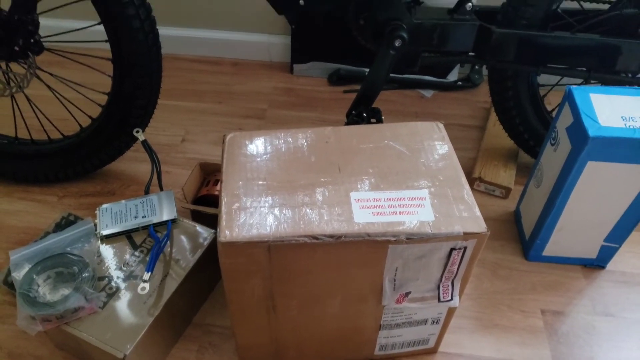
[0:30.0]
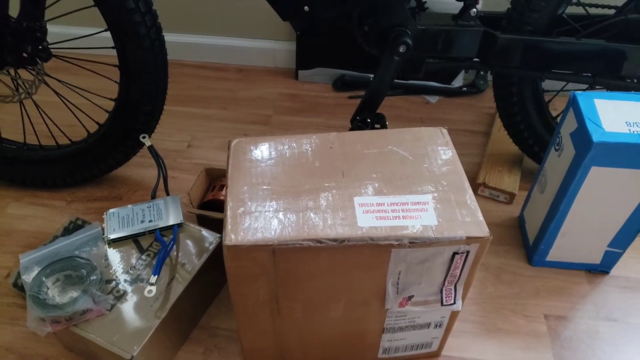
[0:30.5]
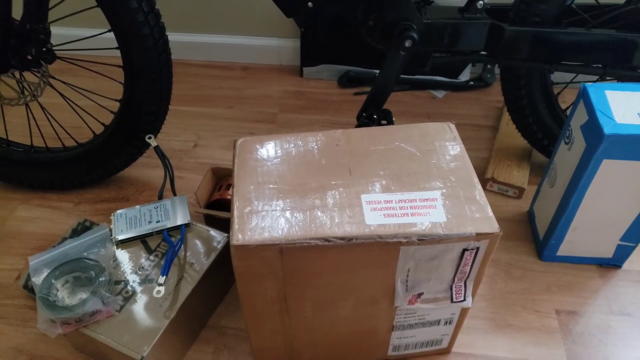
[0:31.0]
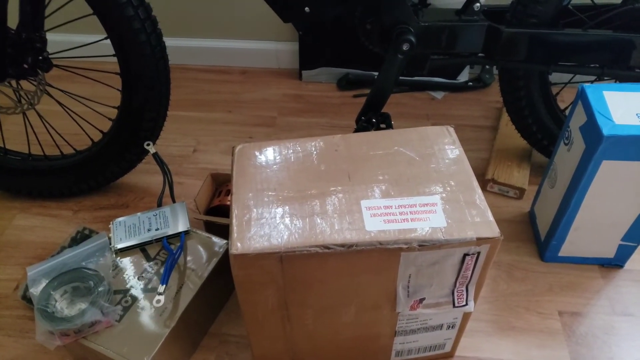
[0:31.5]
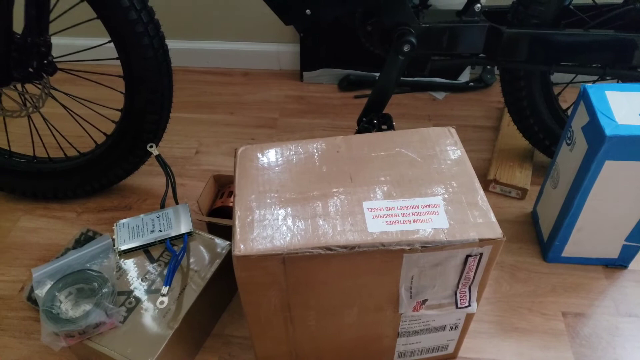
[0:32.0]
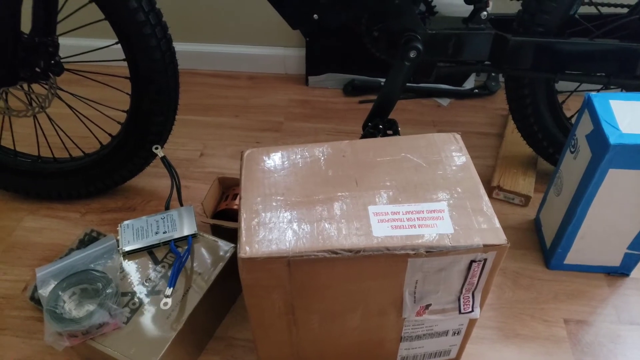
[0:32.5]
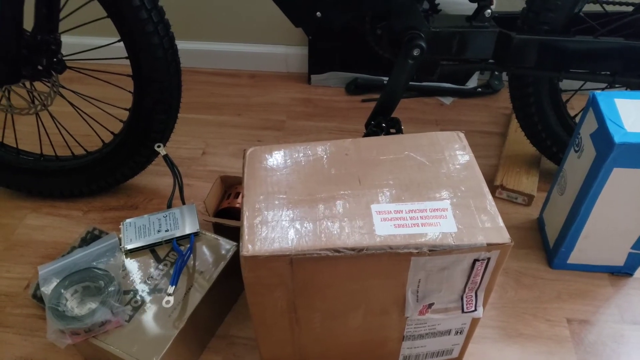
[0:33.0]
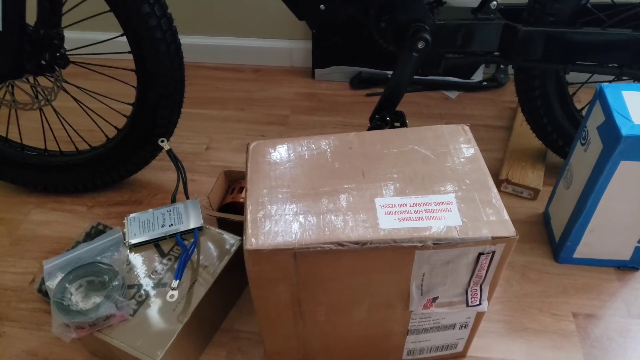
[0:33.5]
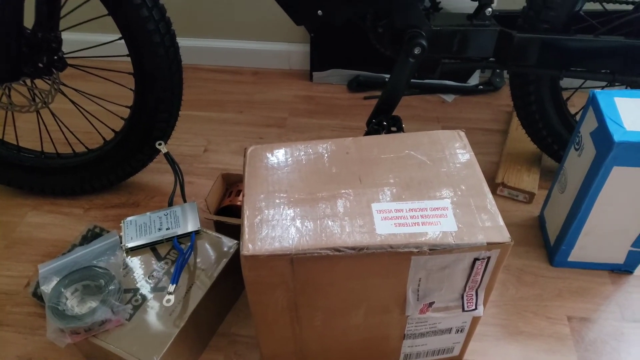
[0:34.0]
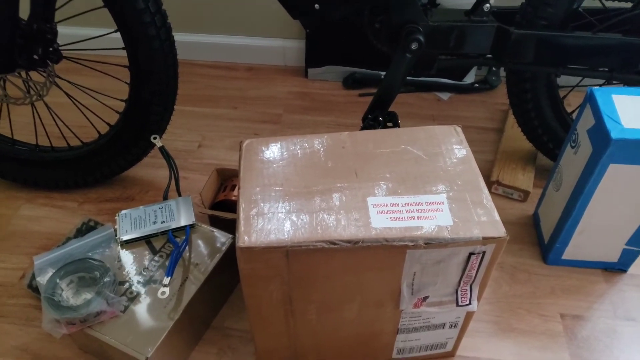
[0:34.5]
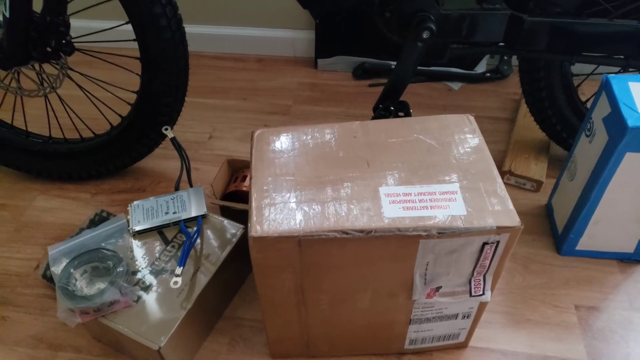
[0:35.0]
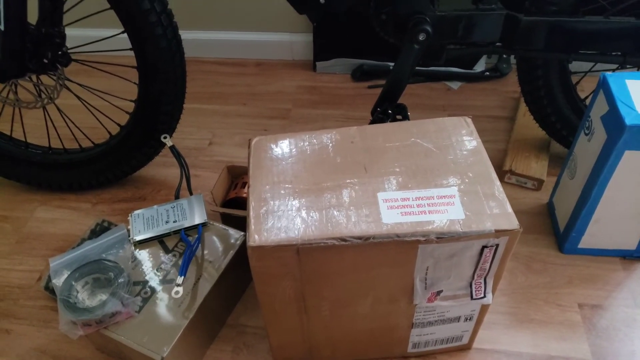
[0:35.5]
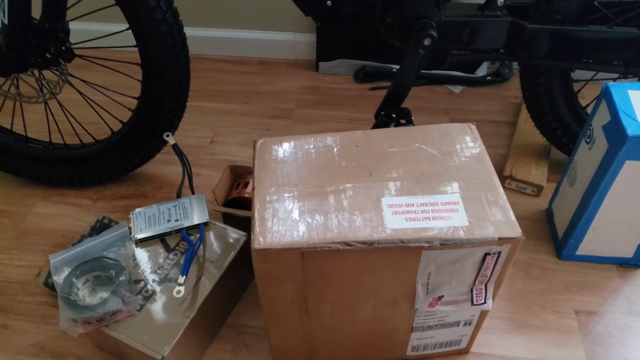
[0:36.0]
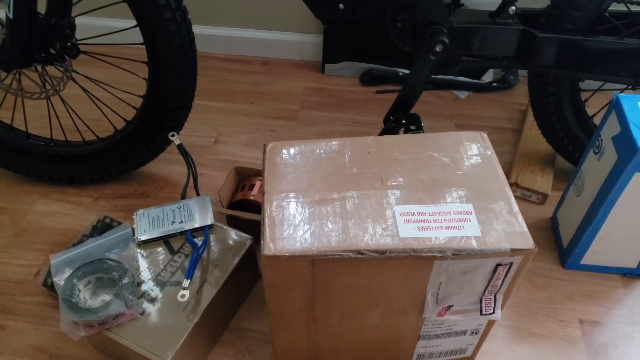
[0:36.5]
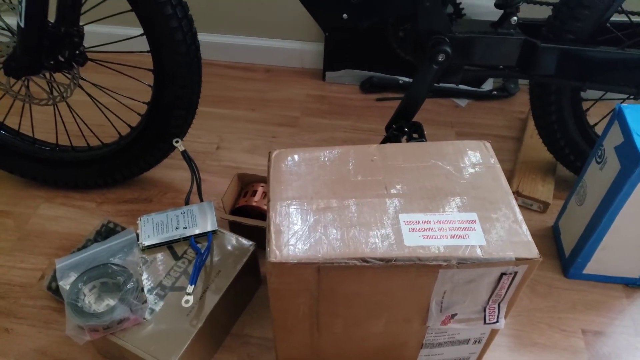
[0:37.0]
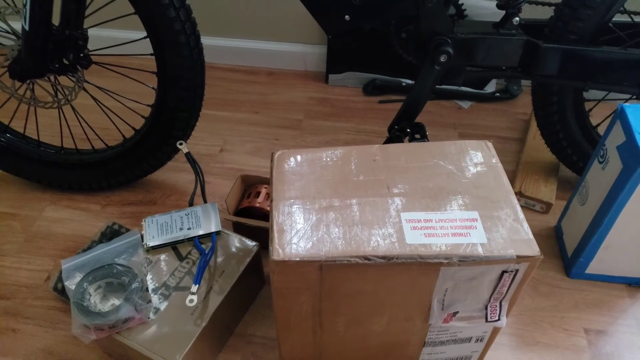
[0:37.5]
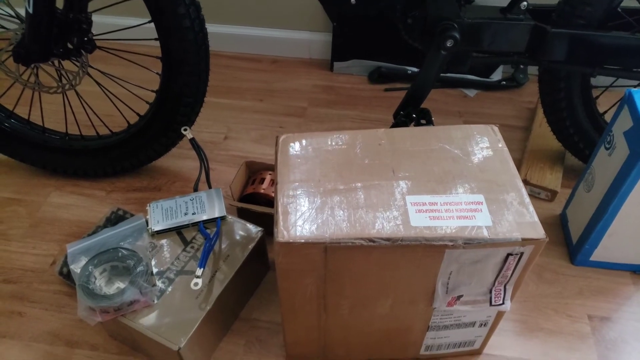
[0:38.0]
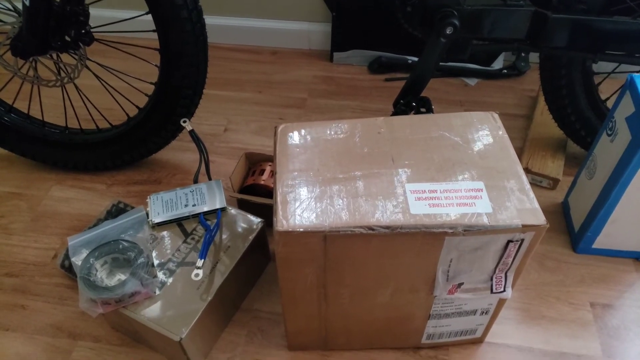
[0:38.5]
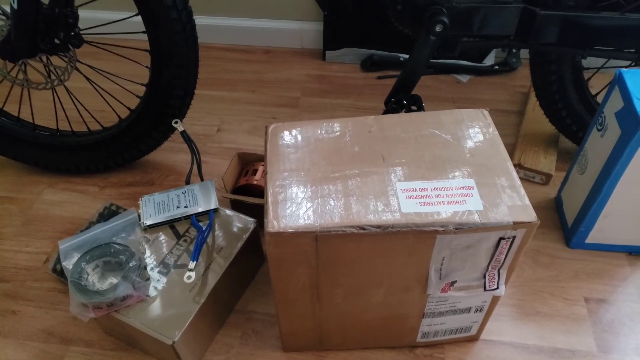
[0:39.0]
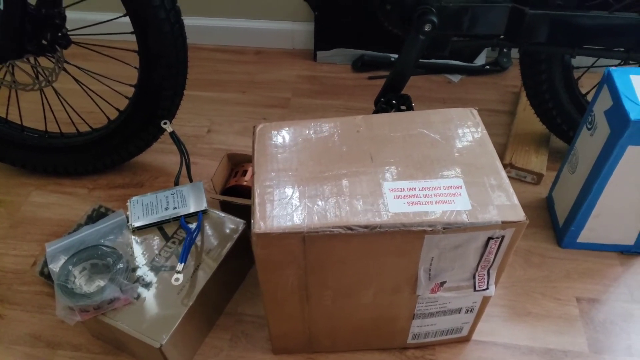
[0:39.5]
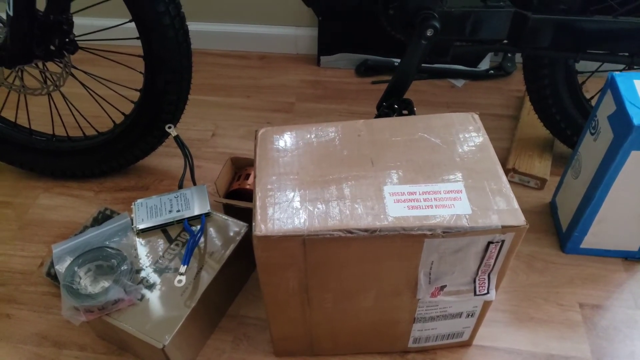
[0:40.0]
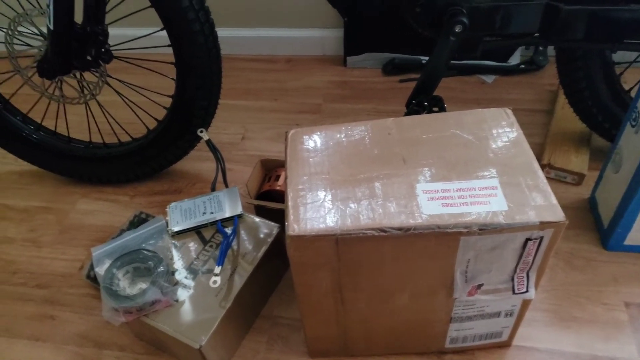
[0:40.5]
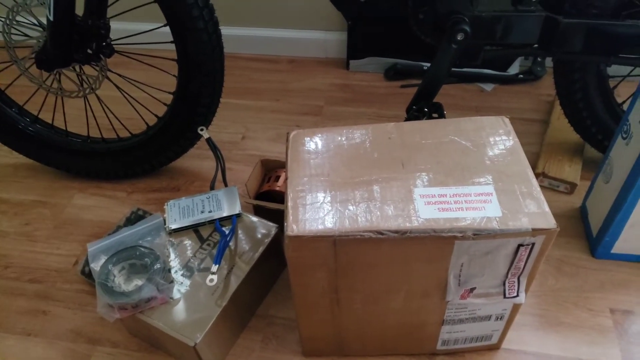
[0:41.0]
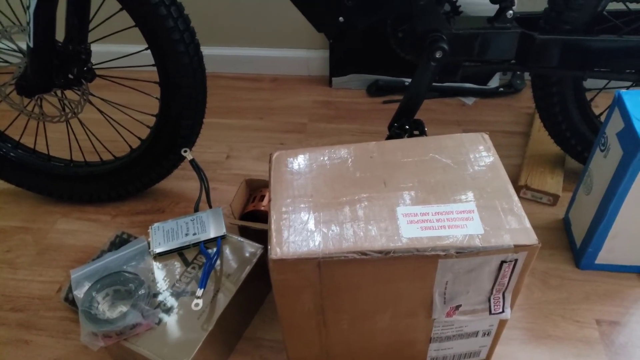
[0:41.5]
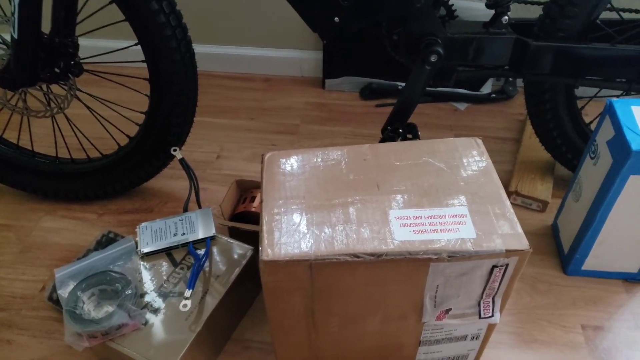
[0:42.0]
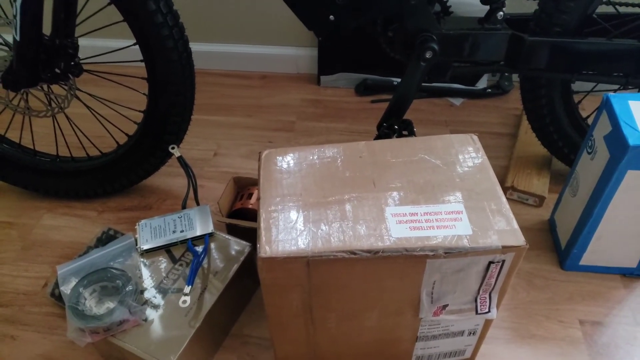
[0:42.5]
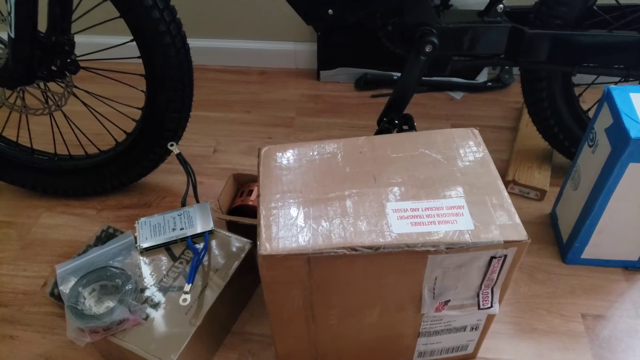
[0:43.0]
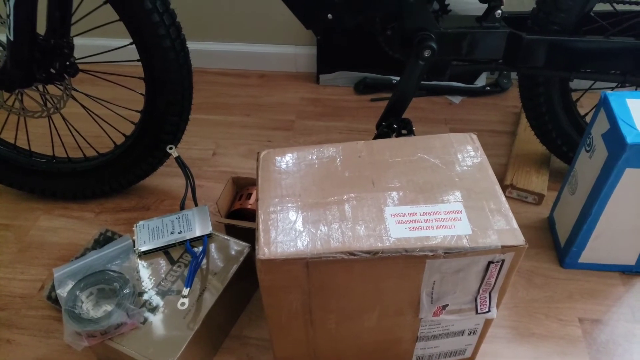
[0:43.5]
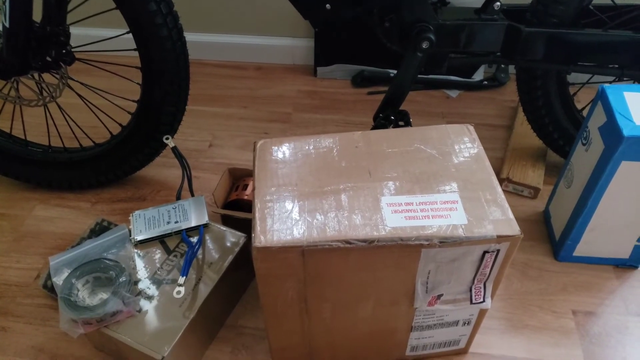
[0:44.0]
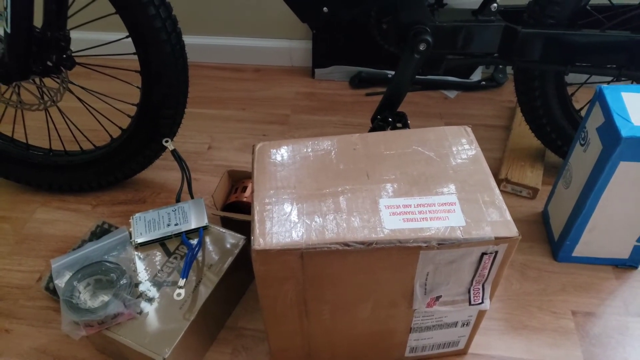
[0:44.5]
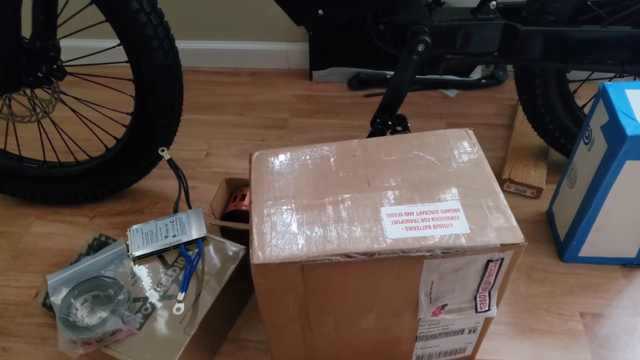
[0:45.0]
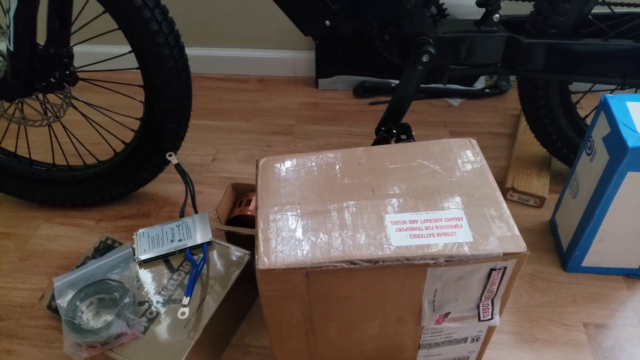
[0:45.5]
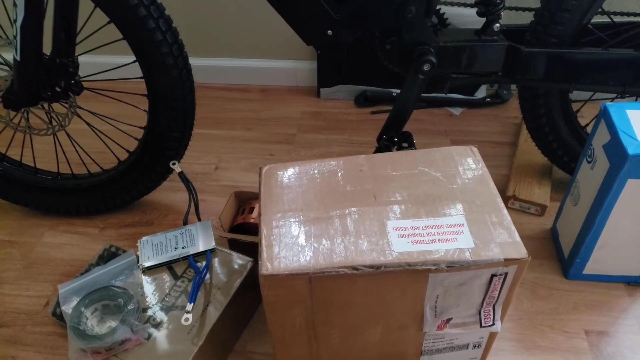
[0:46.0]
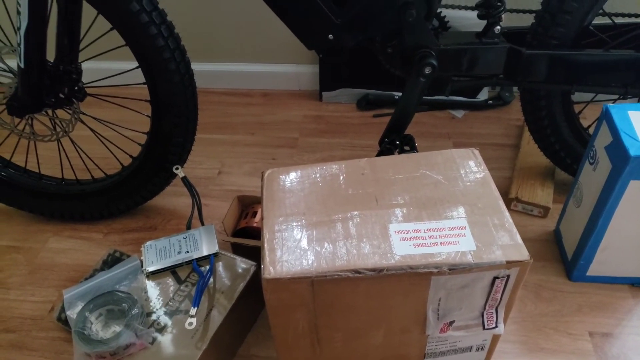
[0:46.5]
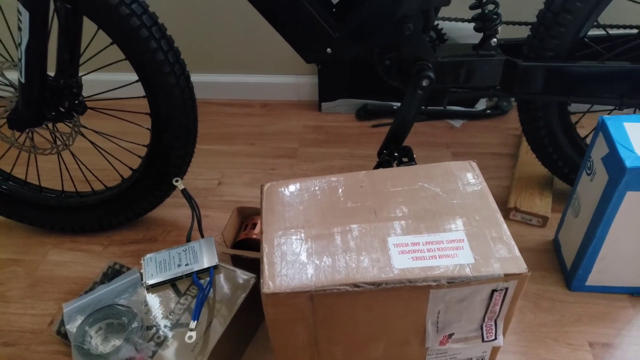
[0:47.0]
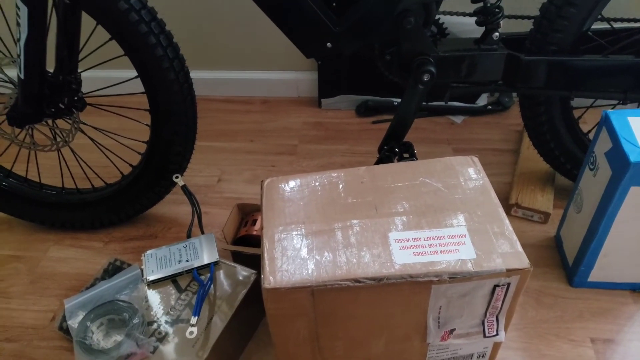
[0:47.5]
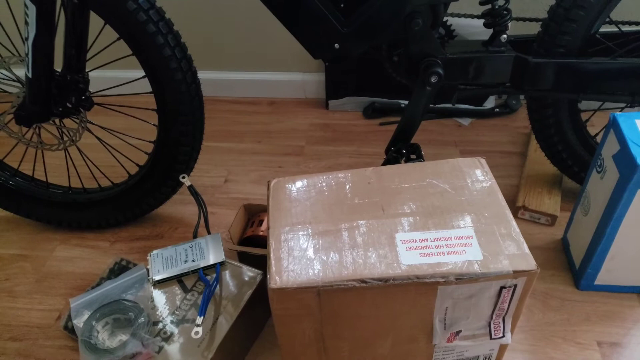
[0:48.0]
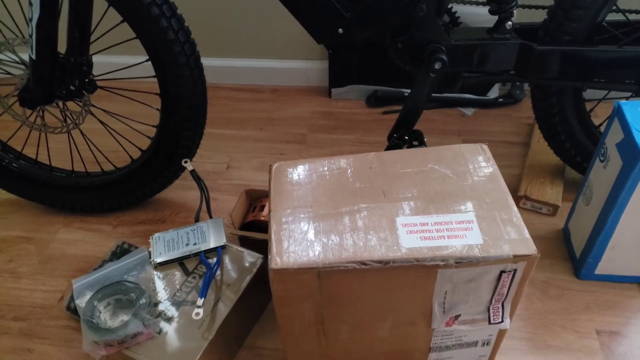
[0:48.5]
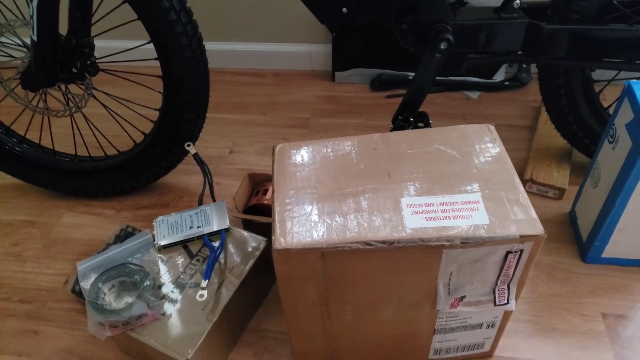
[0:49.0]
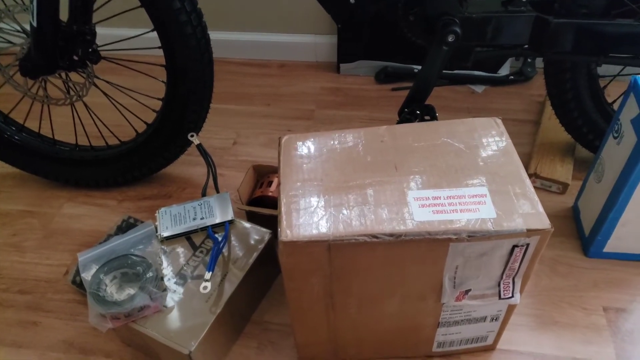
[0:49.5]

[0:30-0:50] The view stays at the same angle on the brown box, which remains in the center of the frame. The camera shifts left and right more than before, and the angle on the box changes slightly as the person fidgets, apparently trying to hold the camera still without success. The footage becomes much less stable, shifting left and right on the screen, sometimes slightly and sometimes quite abruptly. It looks as if the person is sort of nodding their head, and they seem to be talking about the object in focus while growing restless.